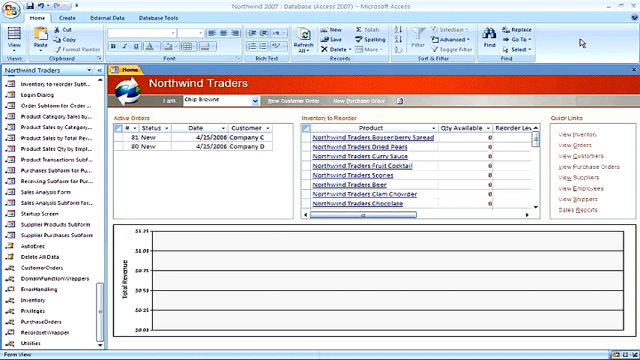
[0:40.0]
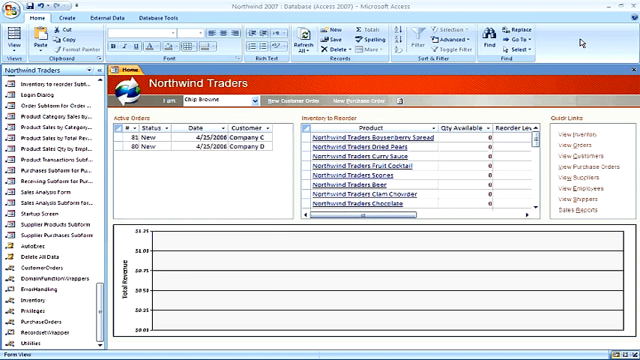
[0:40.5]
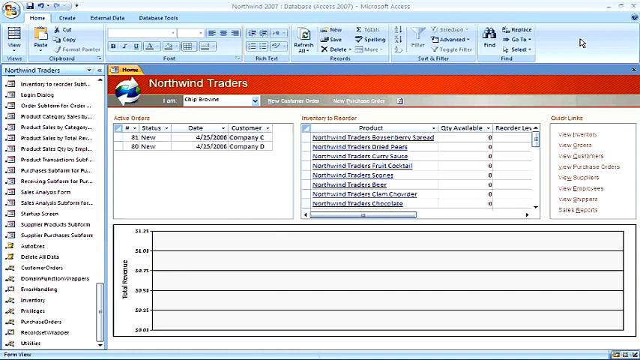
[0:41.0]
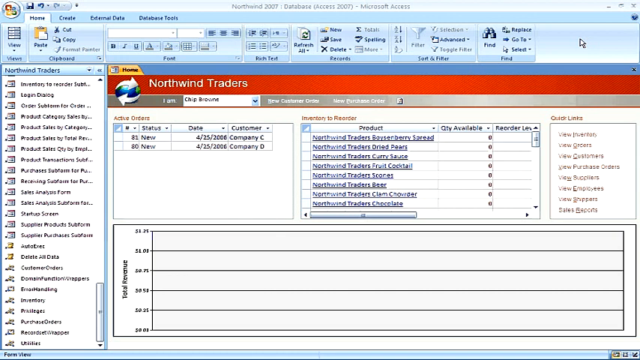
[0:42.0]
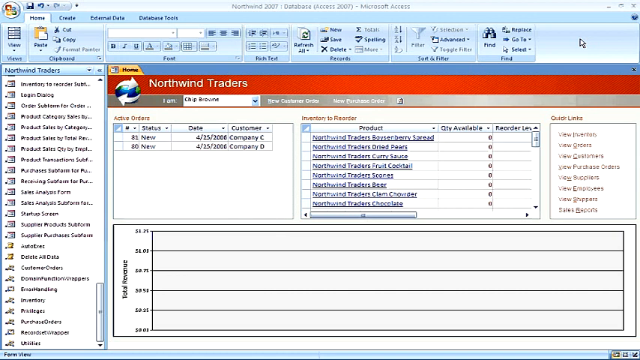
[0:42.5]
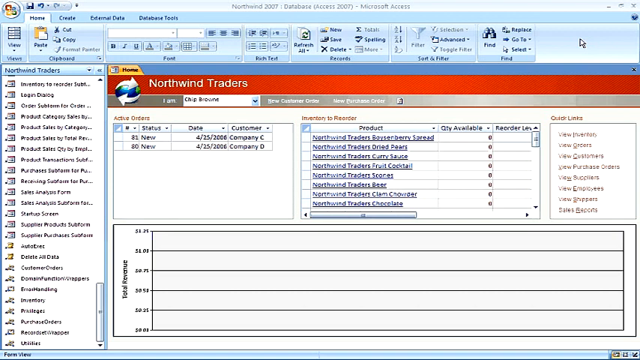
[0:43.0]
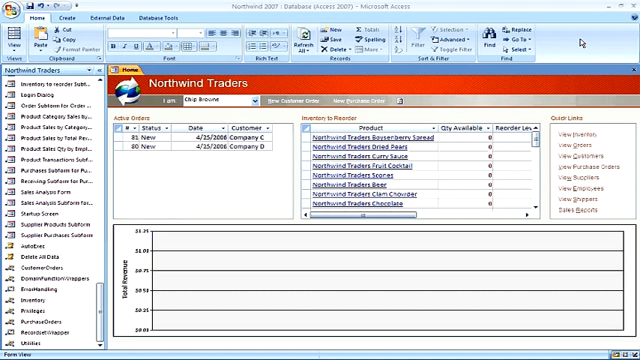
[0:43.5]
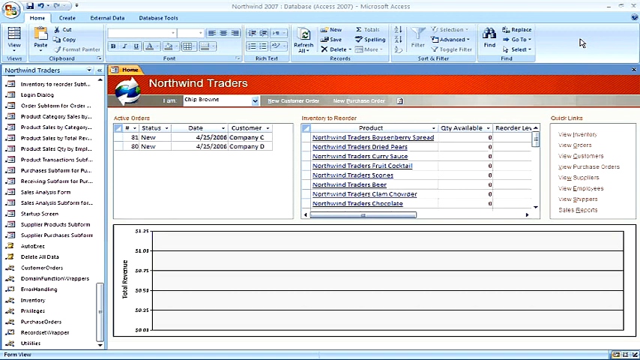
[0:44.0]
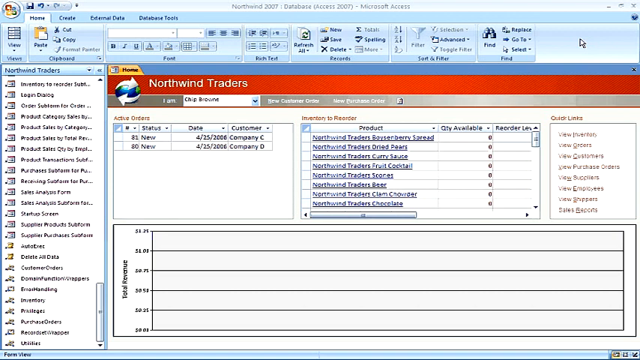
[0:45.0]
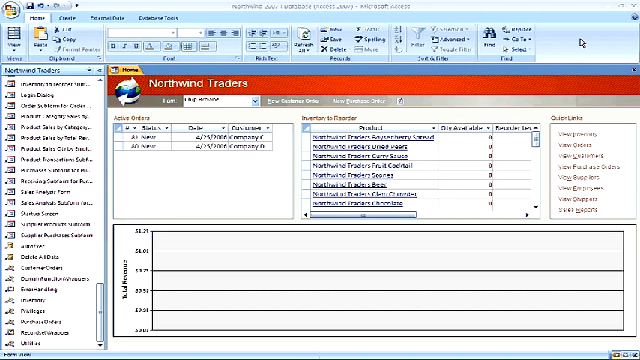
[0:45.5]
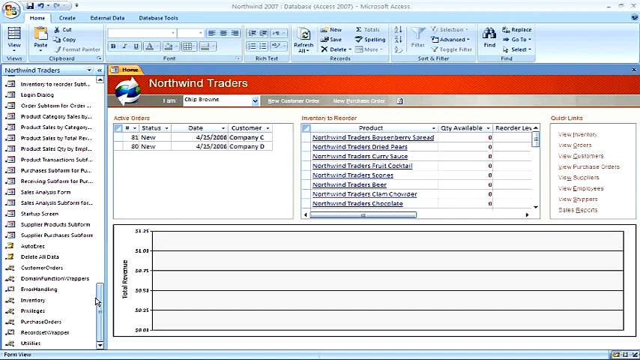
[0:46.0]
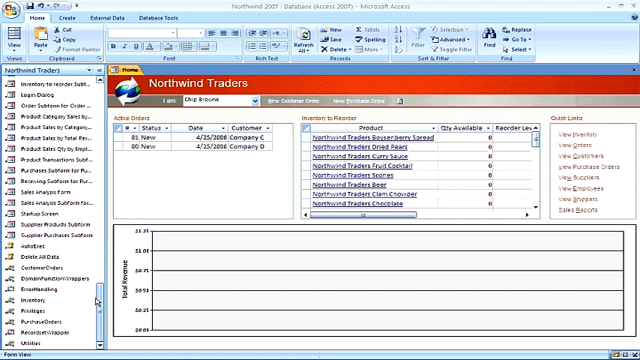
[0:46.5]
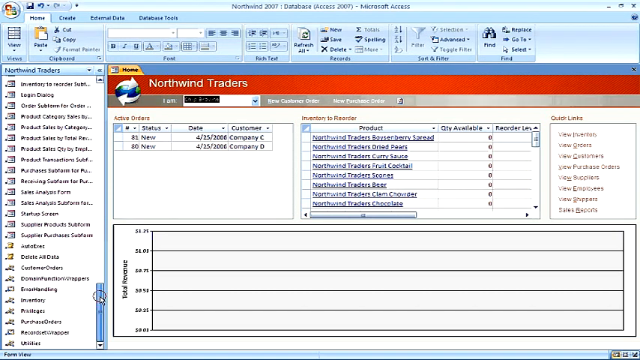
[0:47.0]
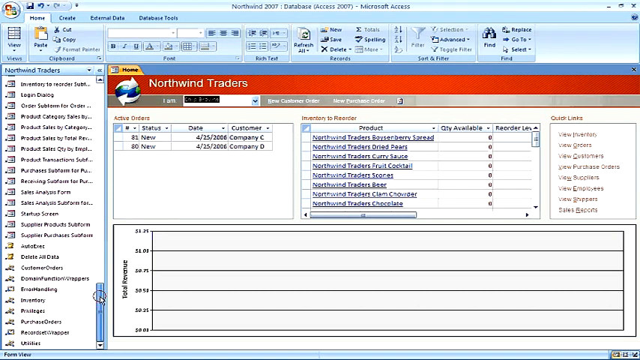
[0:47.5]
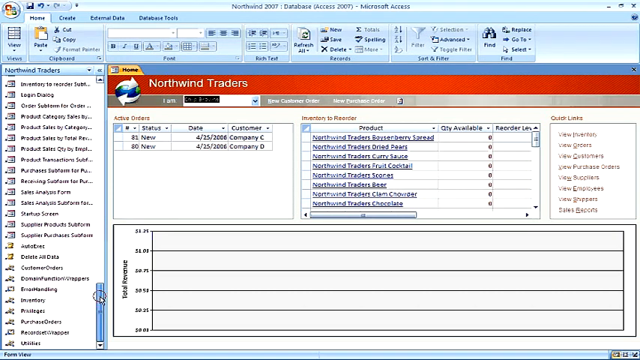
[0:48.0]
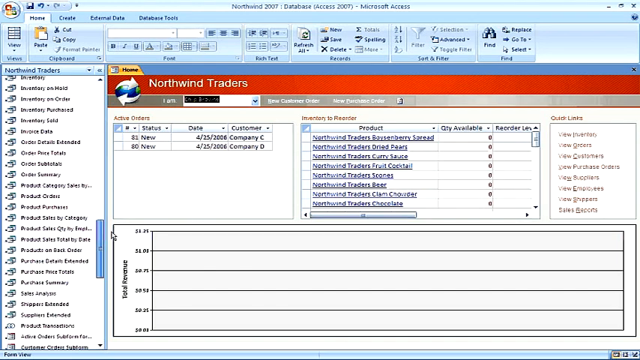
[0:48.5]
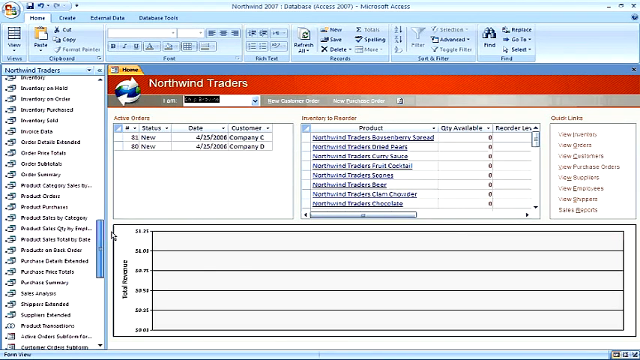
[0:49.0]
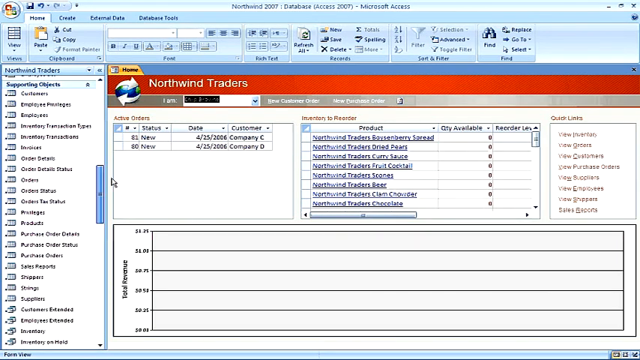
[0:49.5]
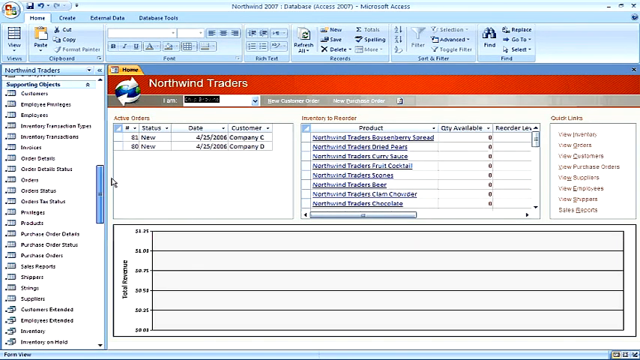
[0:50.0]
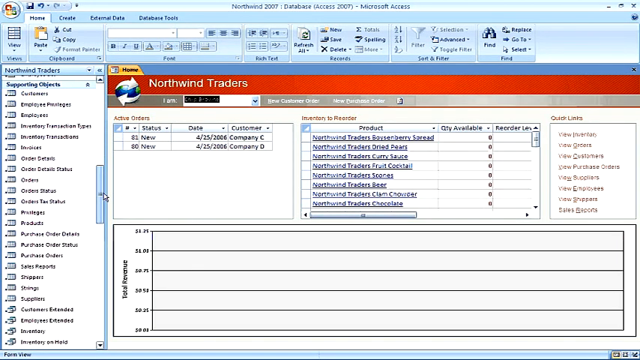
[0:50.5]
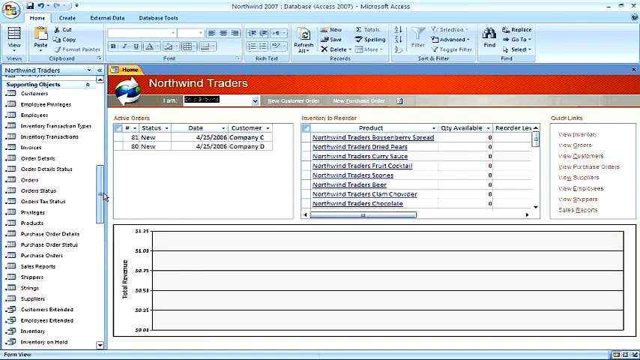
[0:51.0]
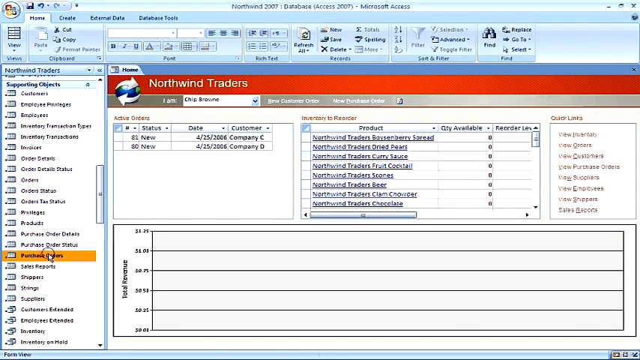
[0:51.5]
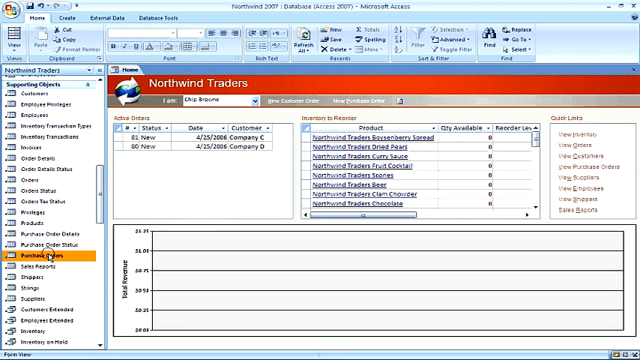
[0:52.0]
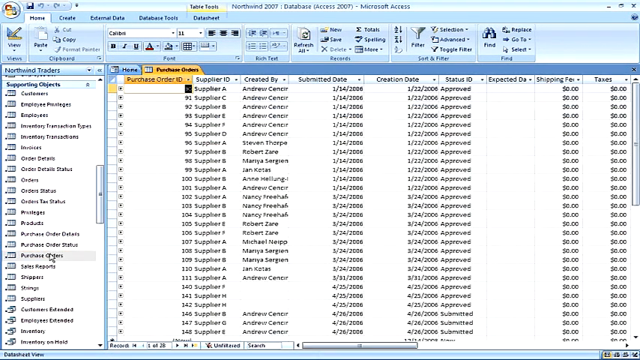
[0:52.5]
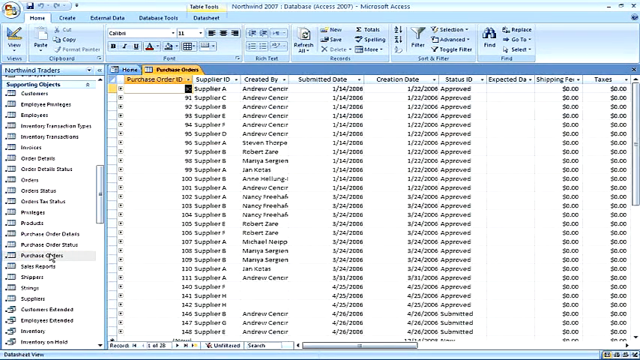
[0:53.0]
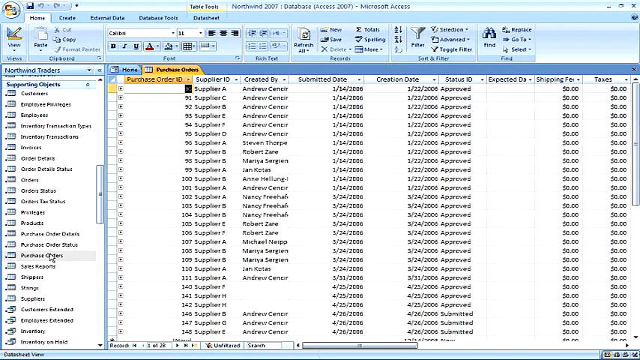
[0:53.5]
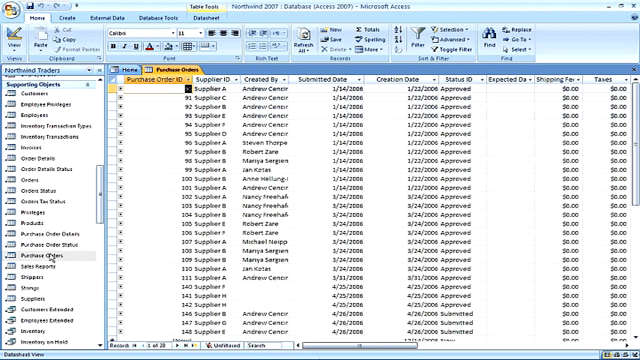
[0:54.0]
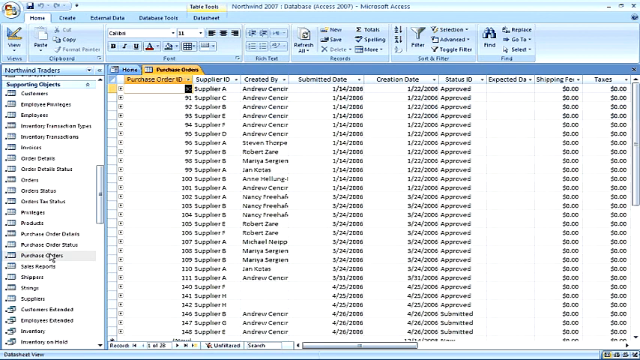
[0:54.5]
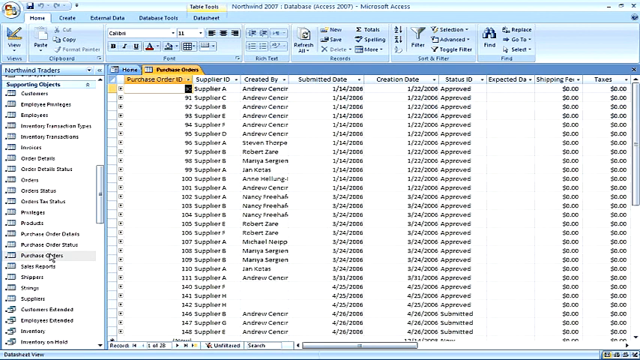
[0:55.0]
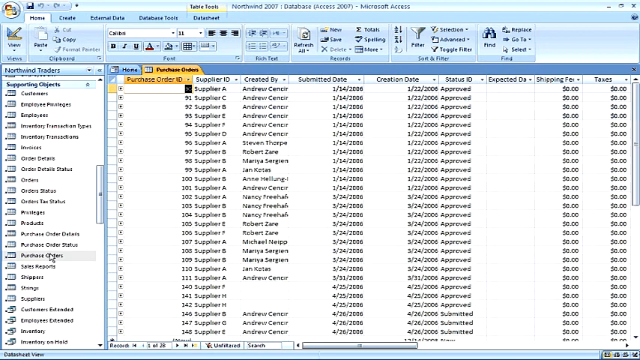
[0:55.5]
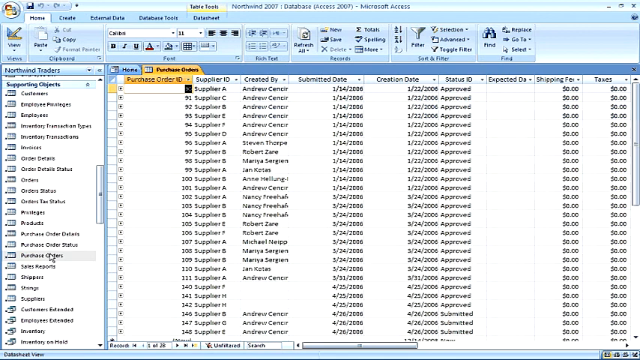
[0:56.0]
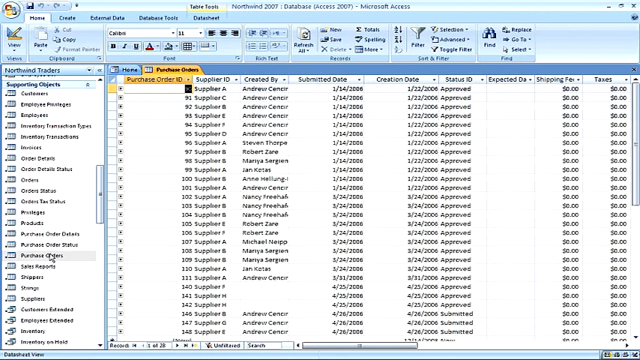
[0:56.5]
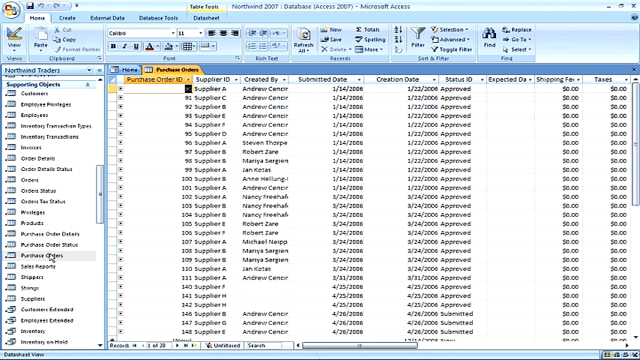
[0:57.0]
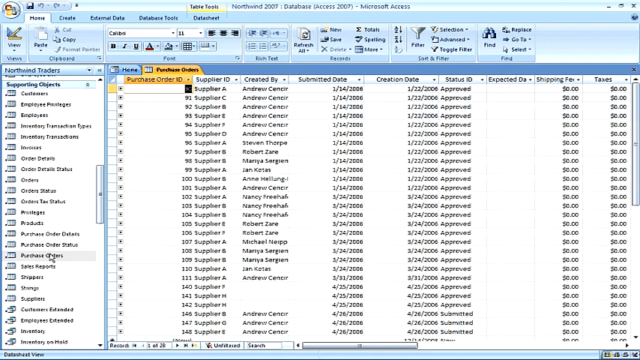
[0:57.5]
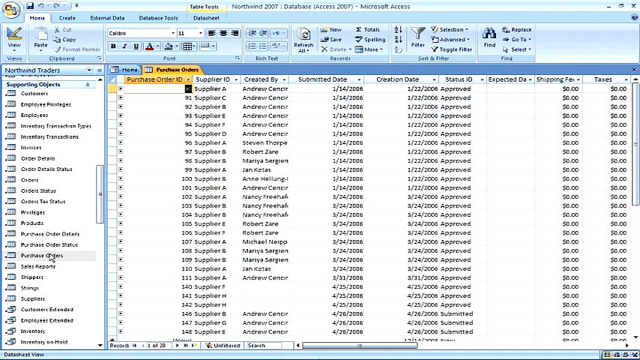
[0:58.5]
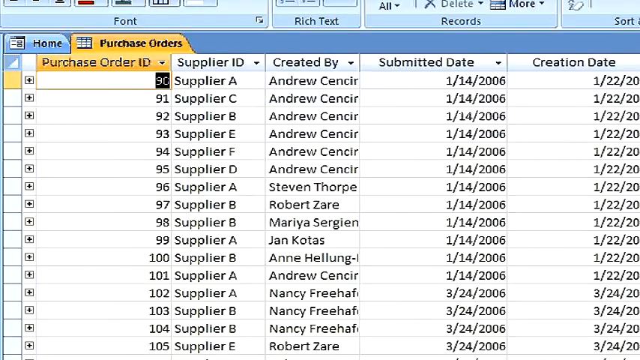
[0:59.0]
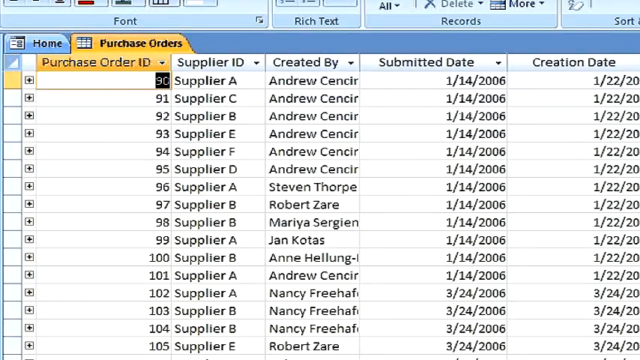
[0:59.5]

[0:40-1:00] The same Microsoft Access screen with data for the company Northwind Traders is shown. The mouse pointer moves on the screen, moving a drag bar, scroll bar, or the left-hand pane. The man clicks open a link called "Purchase Orders", which shows logged purchase orders. The view zooms in on some of the data close up and then back out to the original screen. Only the screen is shown, with no shot of the man himself; he seems to be illustrating functions connected to tracking purchase orders from different suppliers.